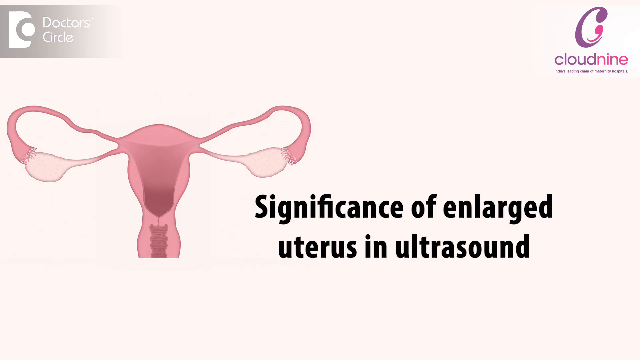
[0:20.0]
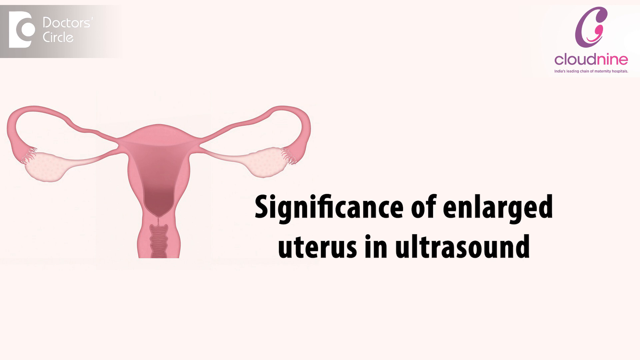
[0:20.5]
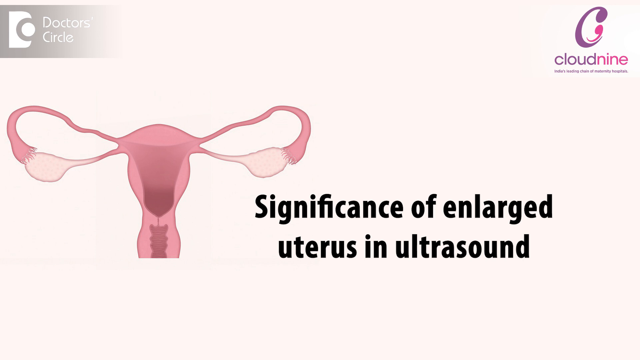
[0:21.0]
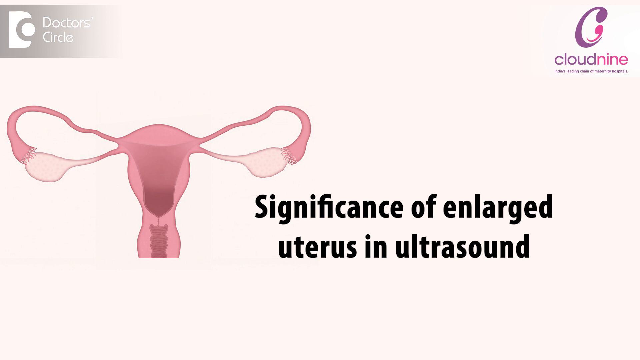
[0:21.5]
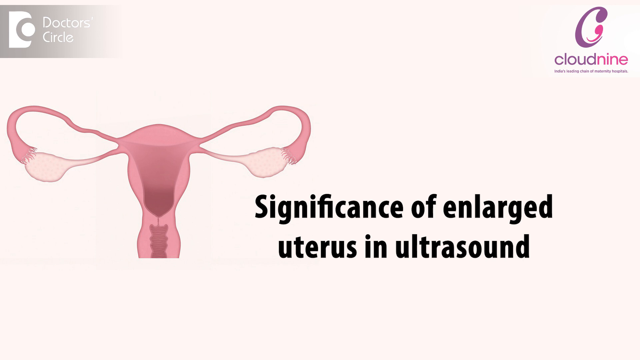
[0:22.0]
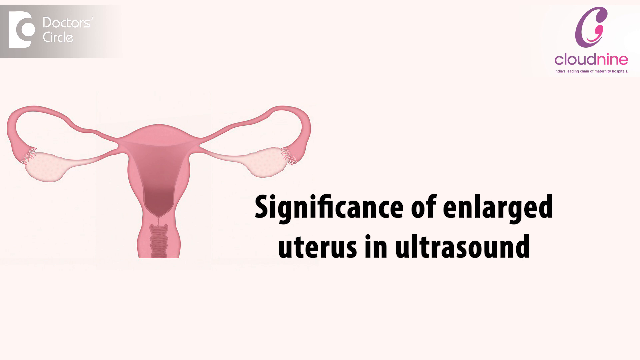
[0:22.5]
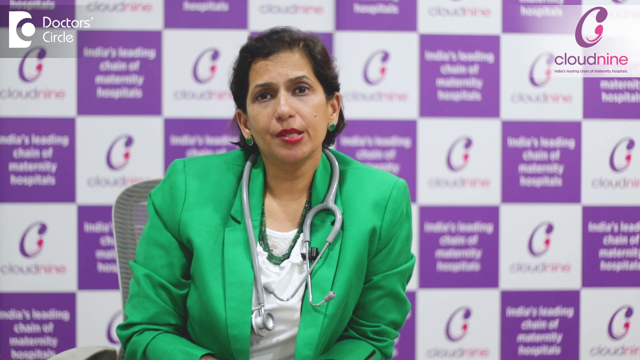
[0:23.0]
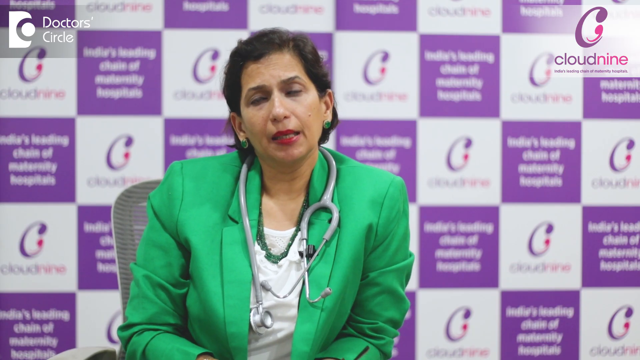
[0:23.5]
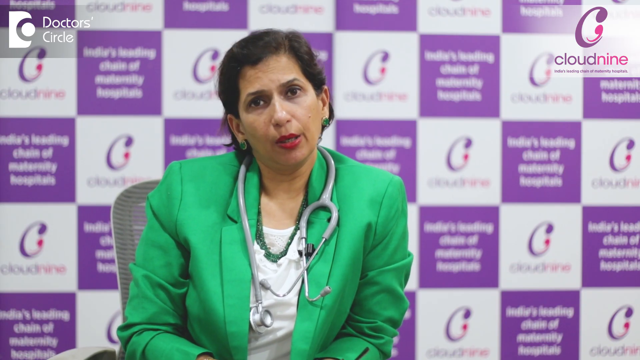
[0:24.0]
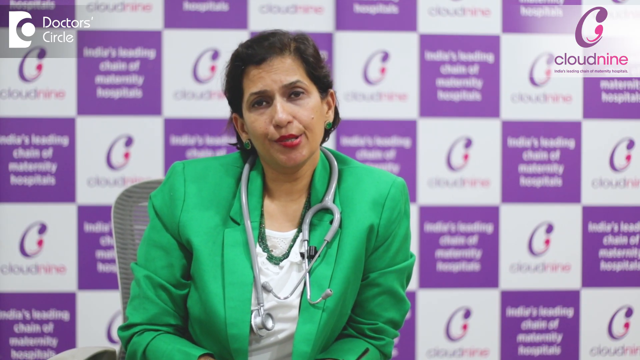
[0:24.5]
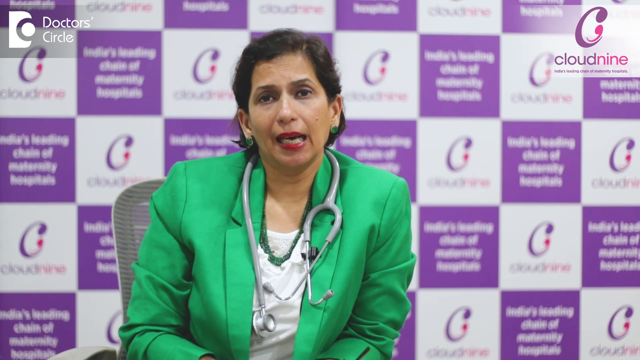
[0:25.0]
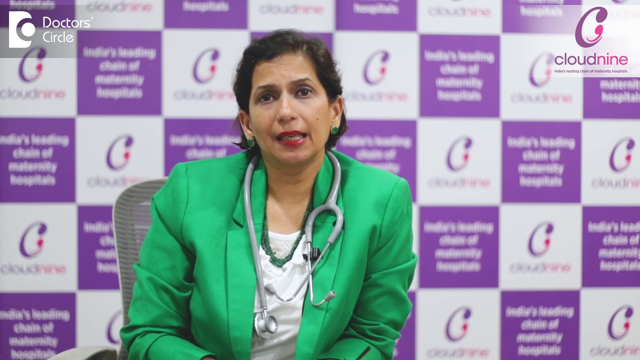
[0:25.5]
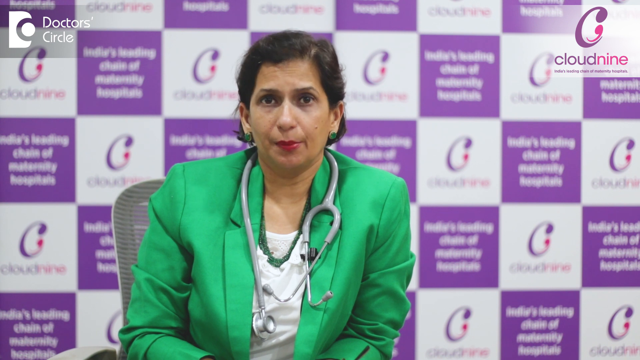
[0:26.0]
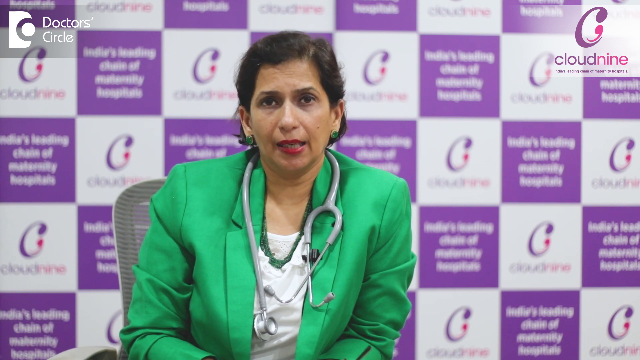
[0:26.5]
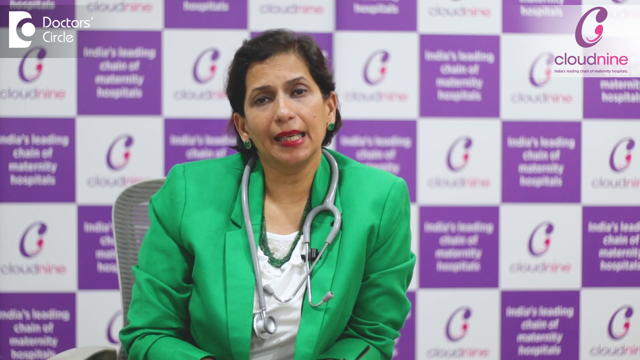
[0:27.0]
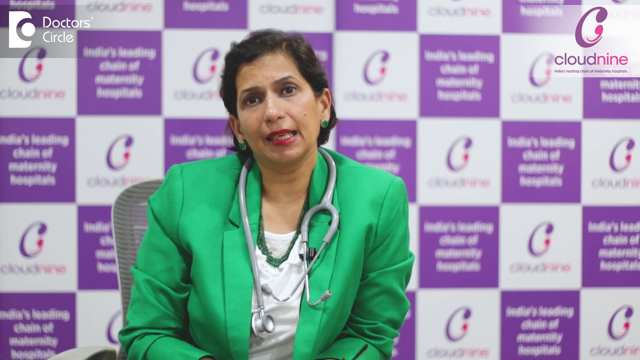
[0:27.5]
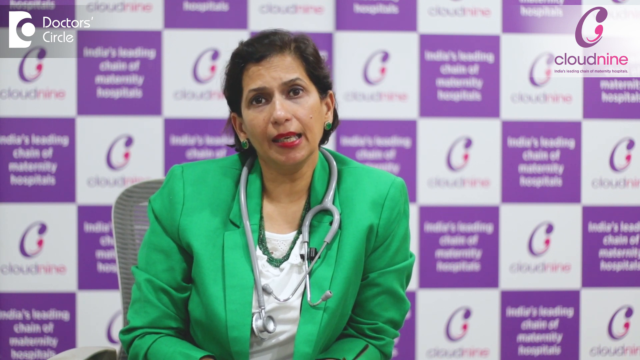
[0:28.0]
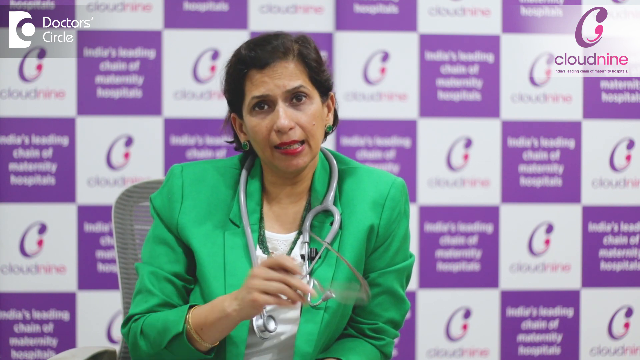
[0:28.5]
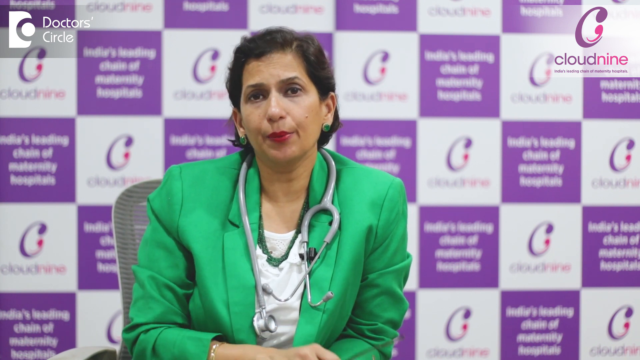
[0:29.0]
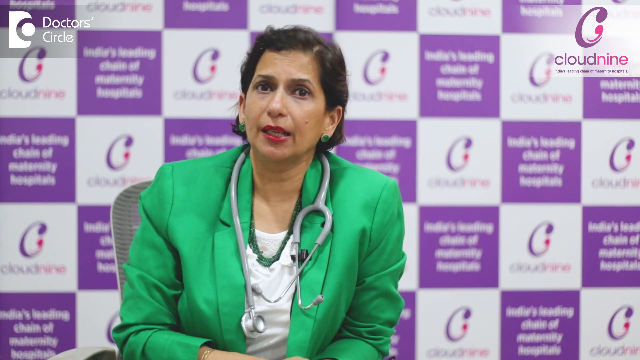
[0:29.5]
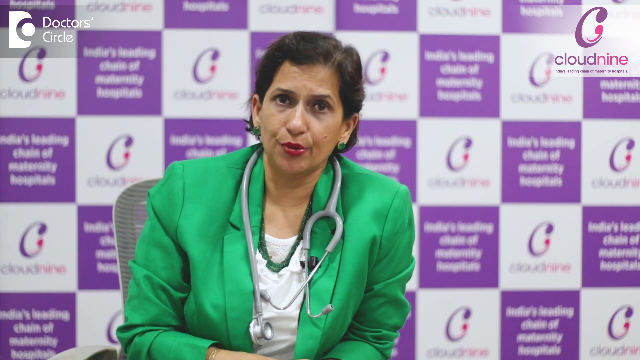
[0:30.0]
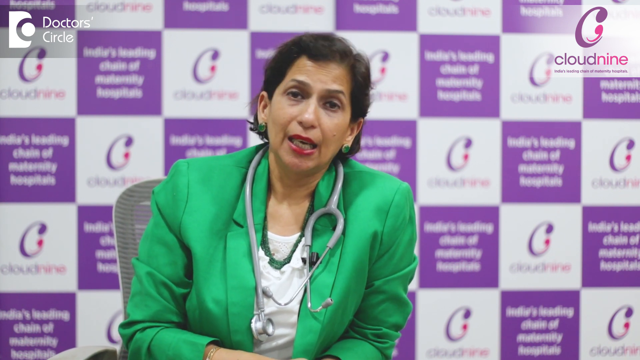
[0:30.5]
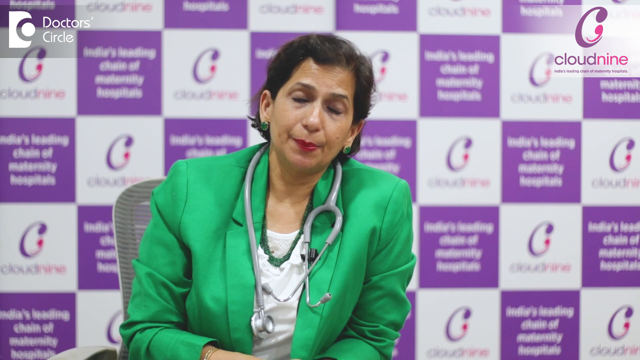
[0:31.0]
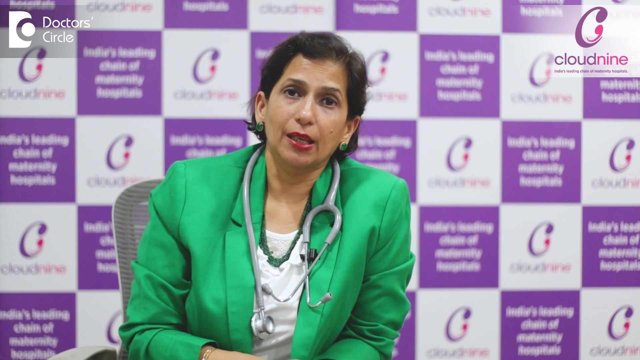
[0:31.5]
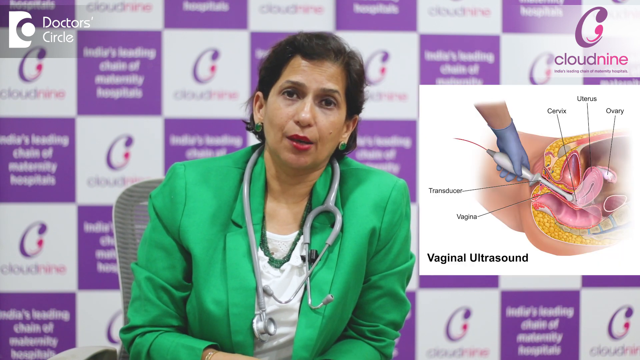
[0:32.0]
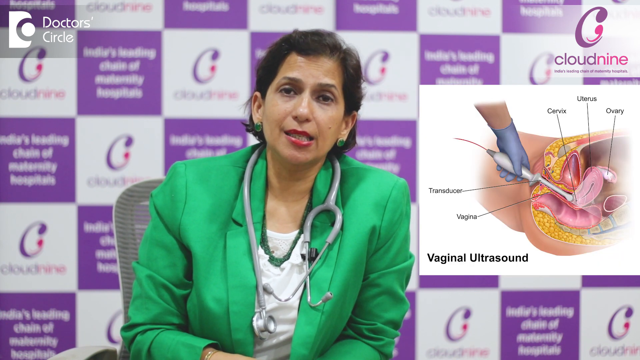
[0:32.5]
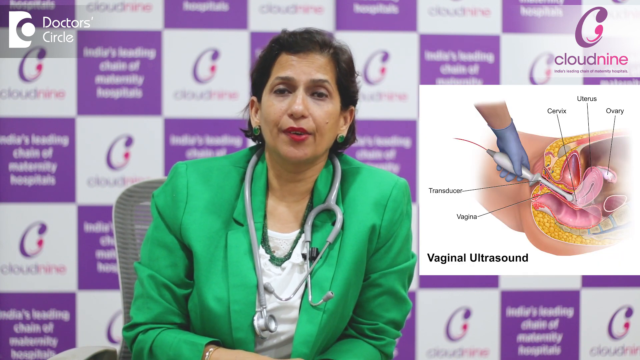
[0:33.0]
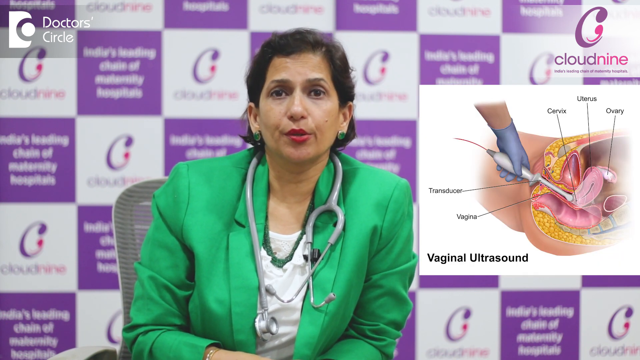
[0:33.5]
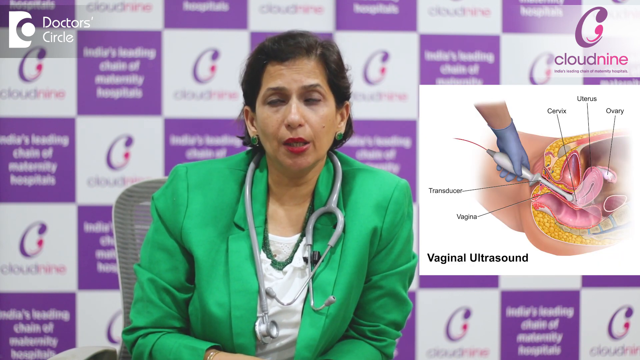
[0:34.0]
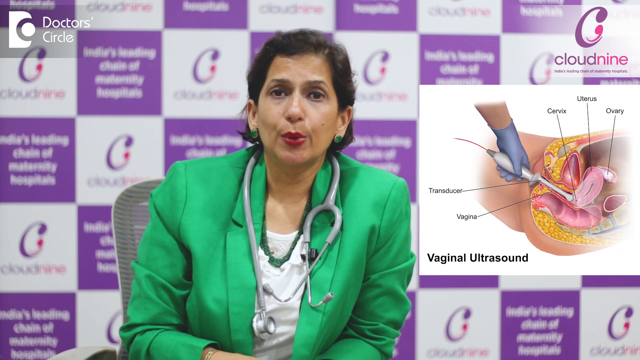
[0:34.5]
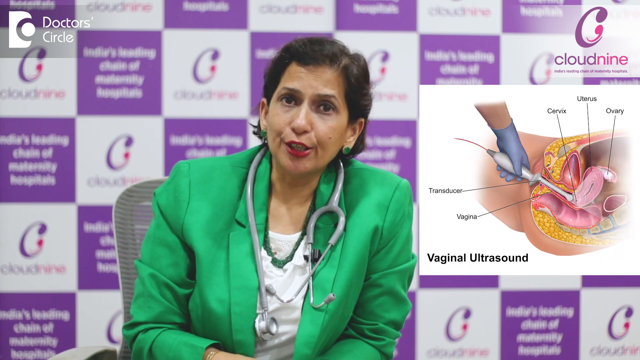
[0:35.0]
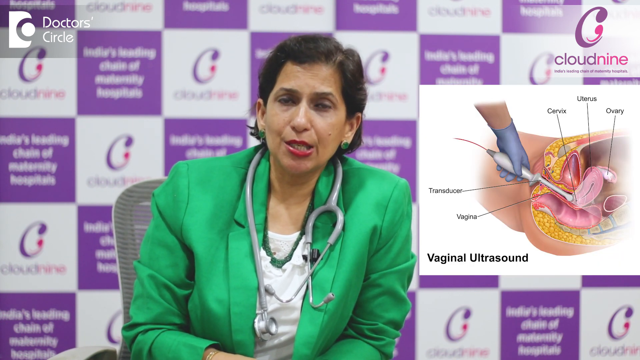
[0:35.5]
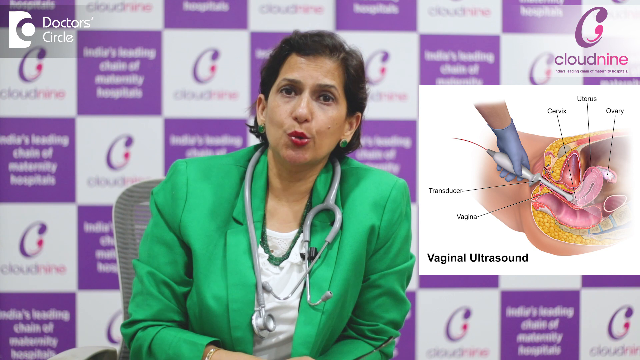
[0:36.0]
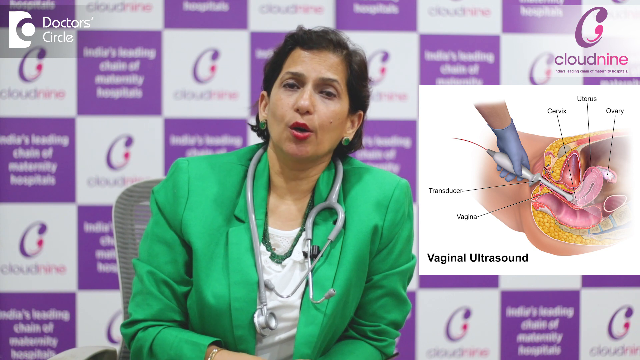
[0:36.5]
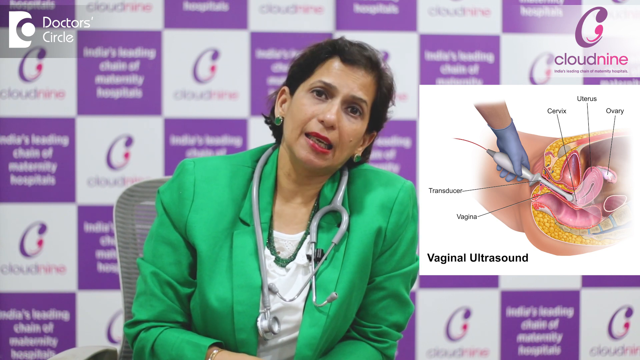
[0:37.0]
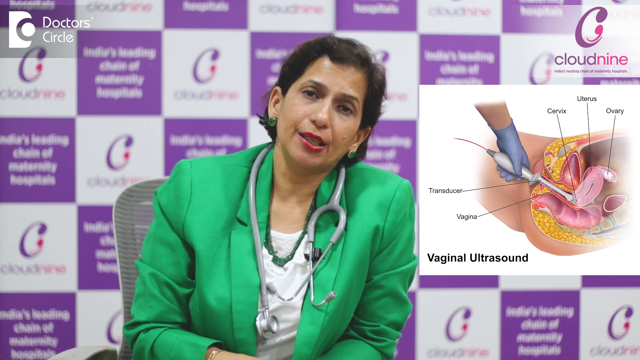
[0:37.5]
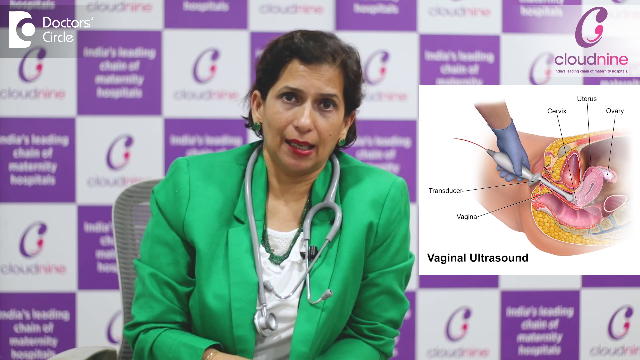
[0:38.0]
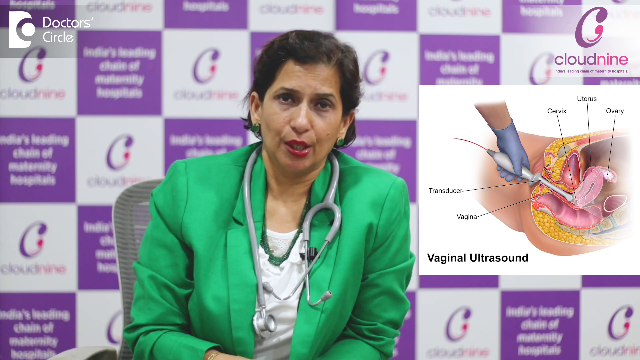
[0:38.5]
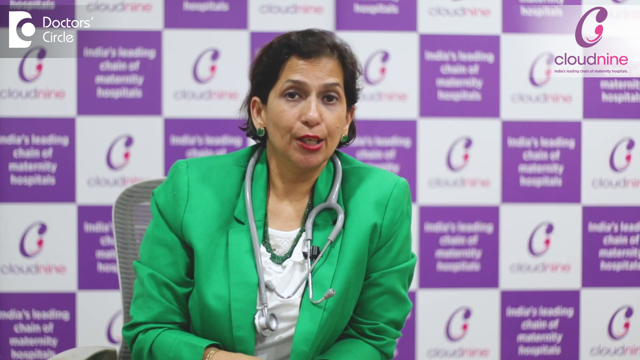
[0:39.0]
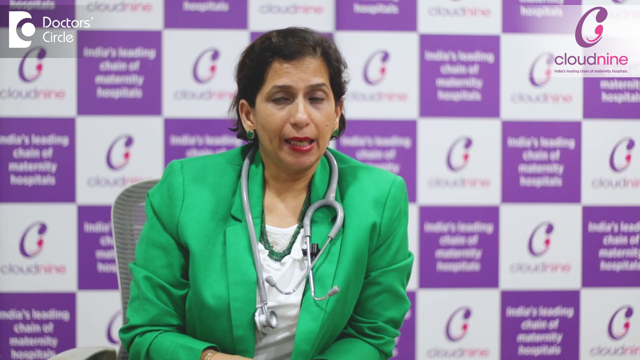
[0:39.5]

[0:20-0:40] A woman sits on a chair slightly off center to the left of the screen. She wears a green blazer and has a stethoscope around her neck, the ear pieces over her left shoulder and the chest piece over her right shoulder, the two parts coming together in front of her. Behind her is a background of chequered squares, half of them purple and the others predominantly white. She sits leaning slightly to her left, her right shoulder held higher than her left. As she speaks, her head tilts to the right and she nods. Her head returns to the center with very slight movements, mostly tilting to the right. She then briefly moves her right hand forward, the only time her hand is seen, as it is otherwise out of frame; she is holding the right arm of her glasses, lifts them briefly, flips her wrist and the hand disappears out of frame again. She continues talking with her head tilting to the left while her shoulders and body do not move, then straightens her head to the center. Text reading "vaginal ultrasound" appears with an animated image of the procedure: a hand in a blue glove holds an instrument with its four fingers underneath a white handle and the thumb over the top, and the instrument is inserted into a vagina. The image shows the interior of the body, with lines labeled ovary, uterus and cervix. Back on the speaker, her head tilts more and more to the left and her shoulders tilt left as well, though her body remains quite still. Her head then moves back more centrally but still tilts, her left shoulder lower than her right.